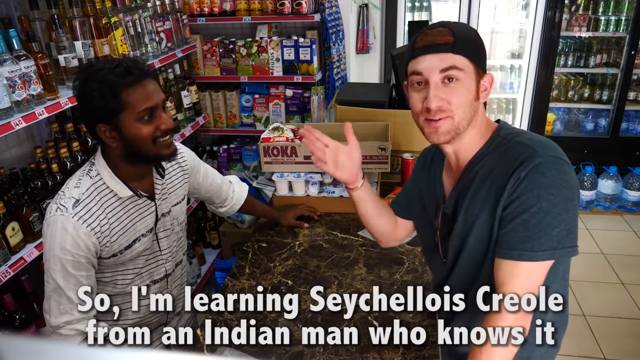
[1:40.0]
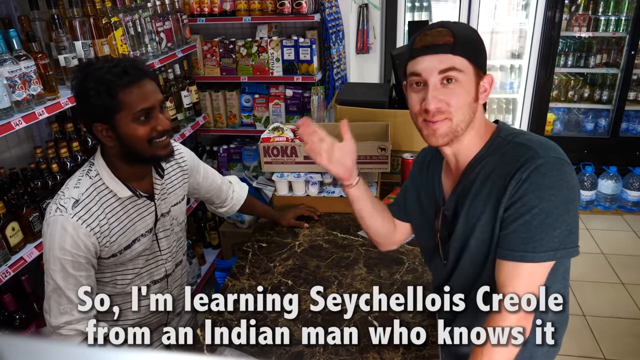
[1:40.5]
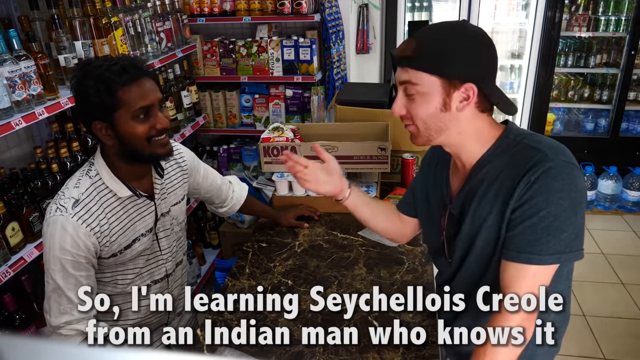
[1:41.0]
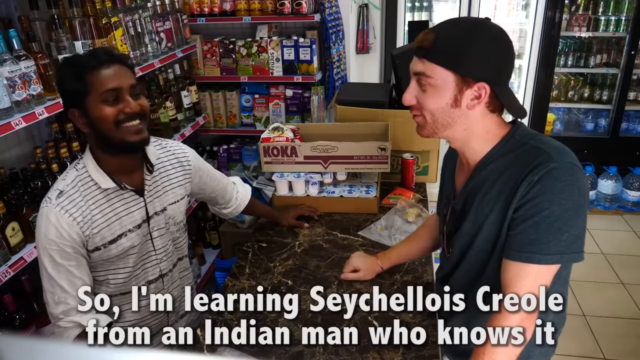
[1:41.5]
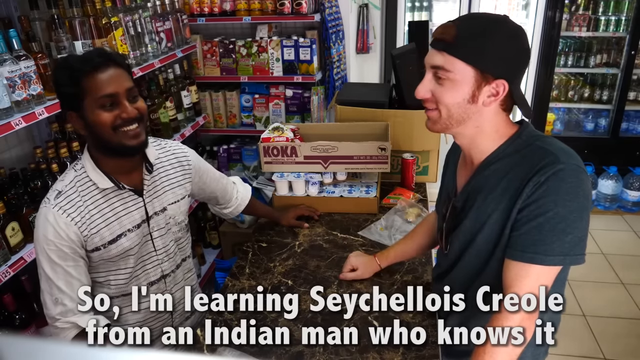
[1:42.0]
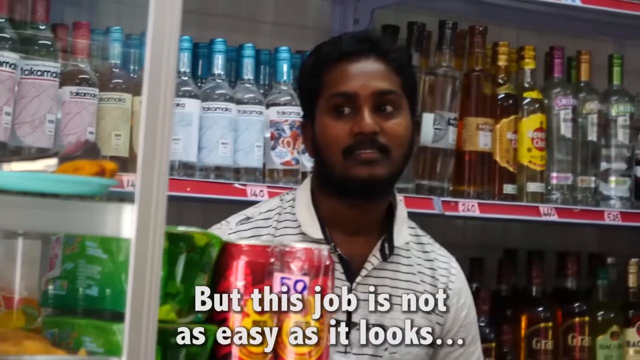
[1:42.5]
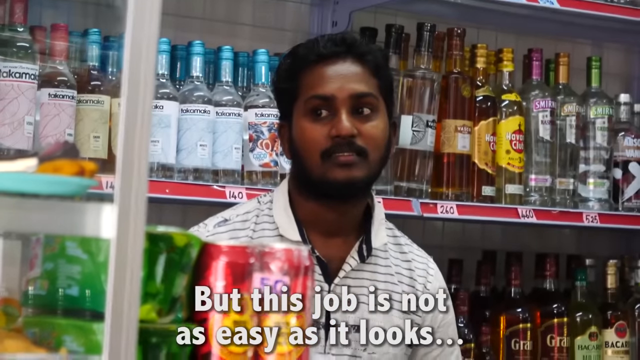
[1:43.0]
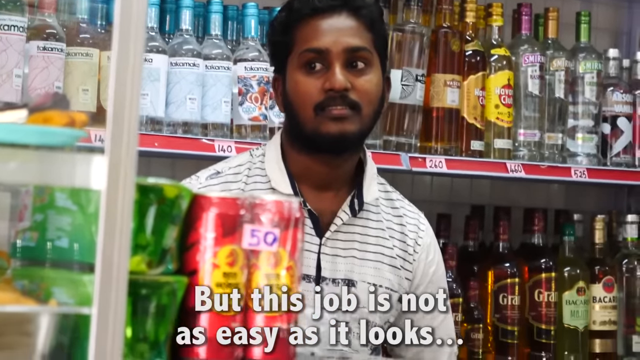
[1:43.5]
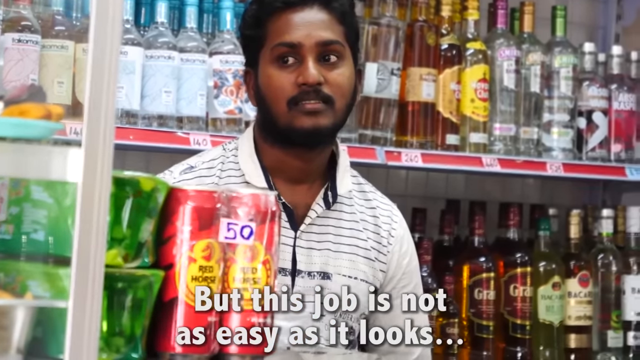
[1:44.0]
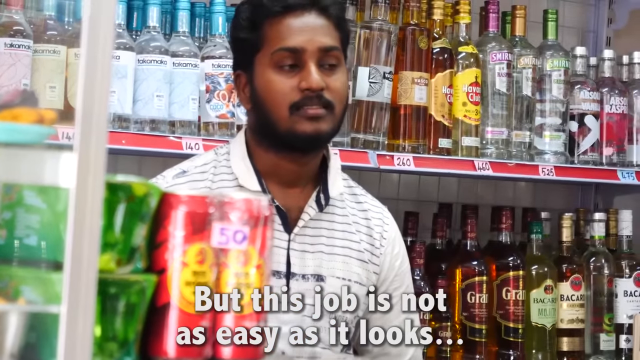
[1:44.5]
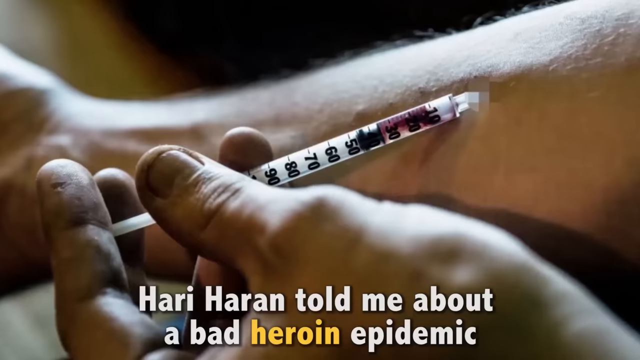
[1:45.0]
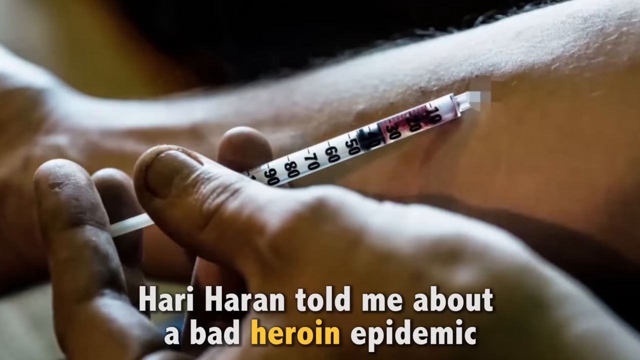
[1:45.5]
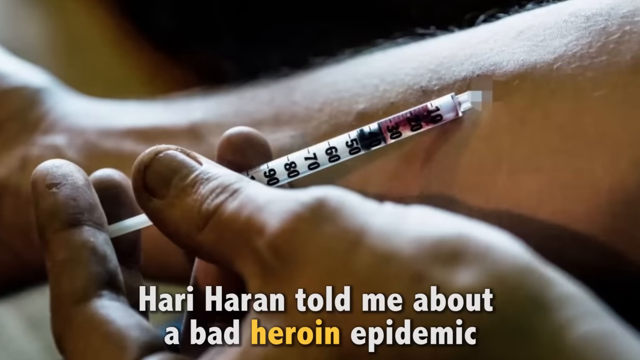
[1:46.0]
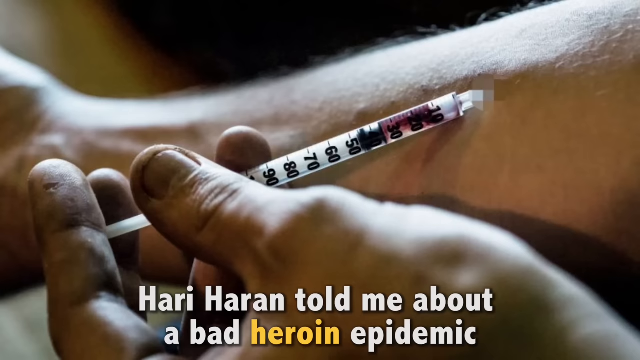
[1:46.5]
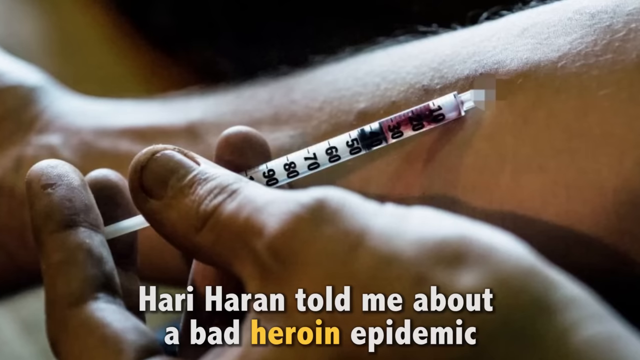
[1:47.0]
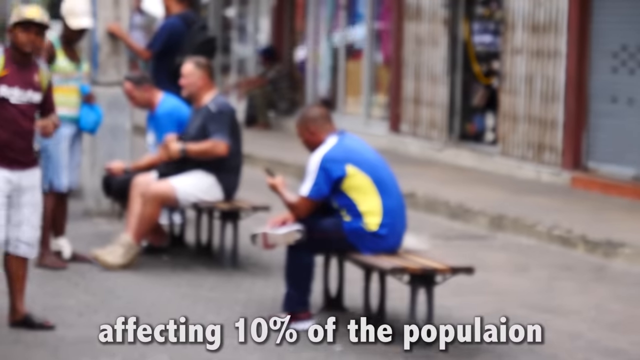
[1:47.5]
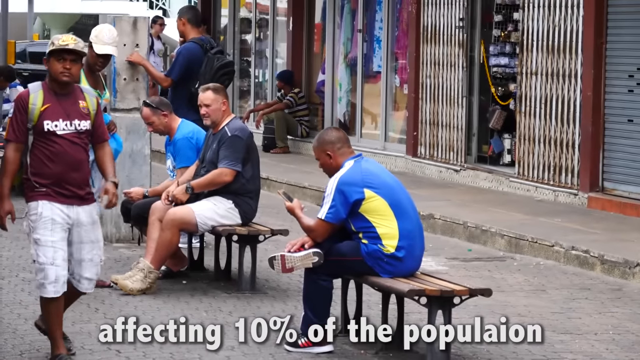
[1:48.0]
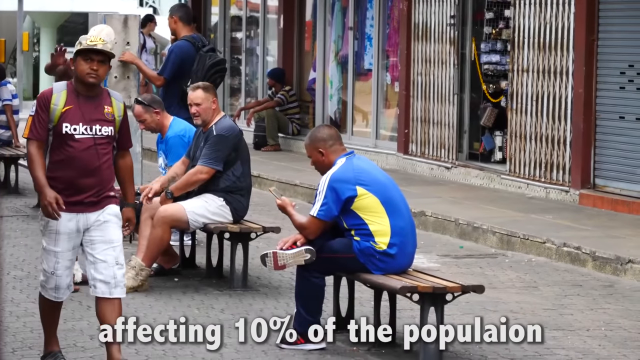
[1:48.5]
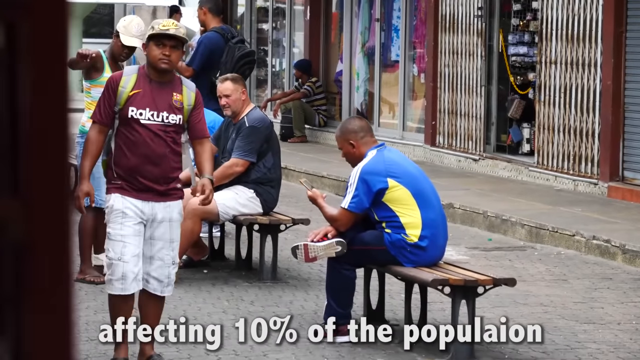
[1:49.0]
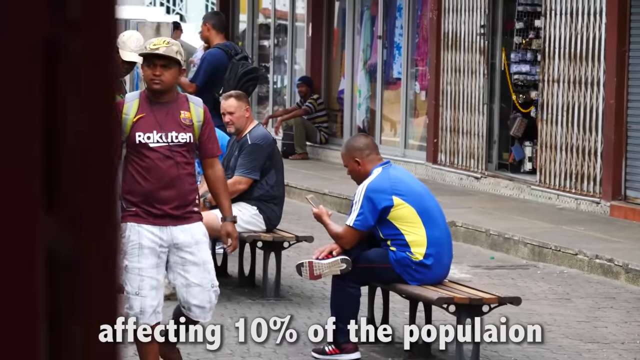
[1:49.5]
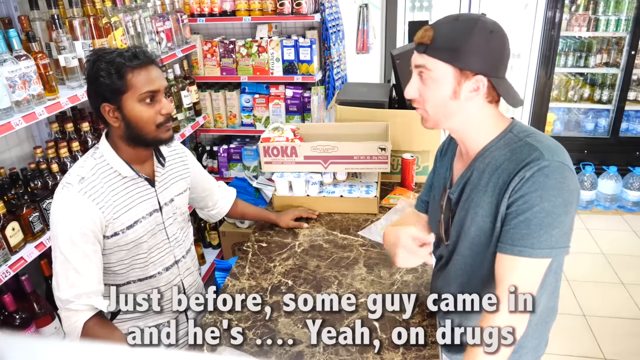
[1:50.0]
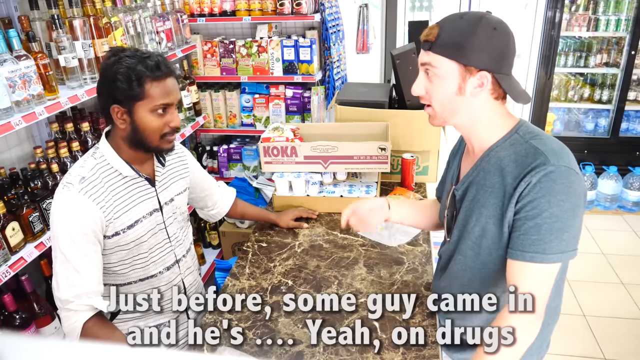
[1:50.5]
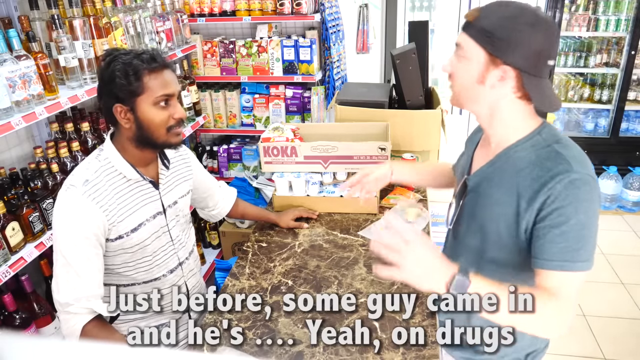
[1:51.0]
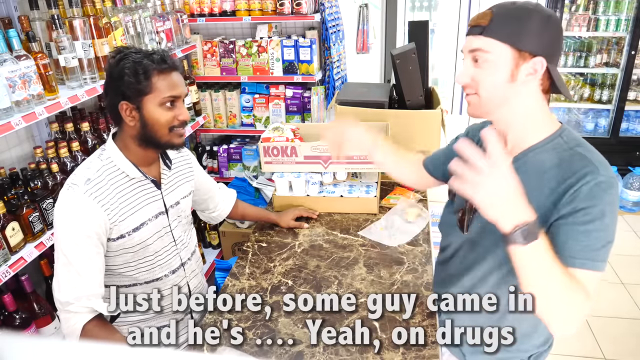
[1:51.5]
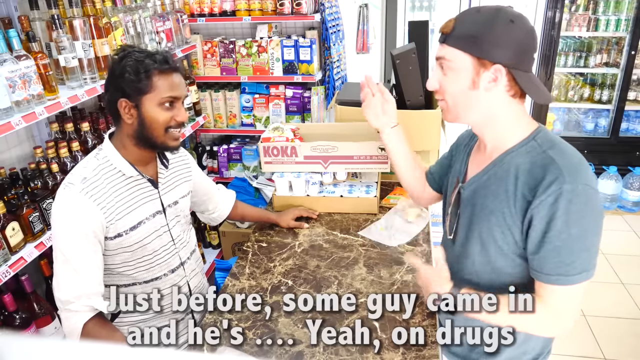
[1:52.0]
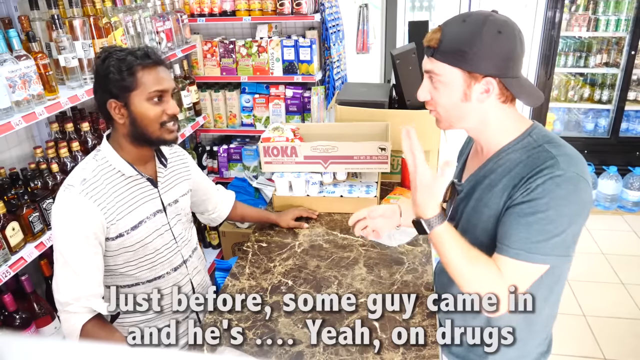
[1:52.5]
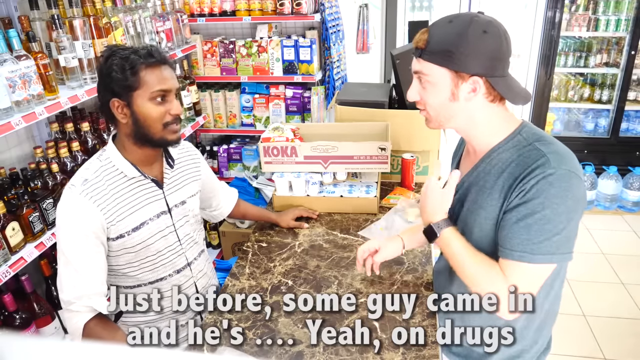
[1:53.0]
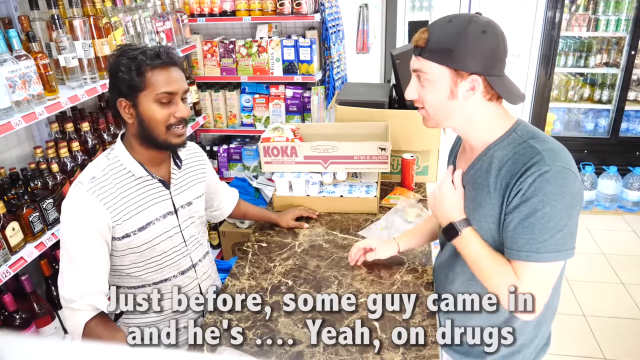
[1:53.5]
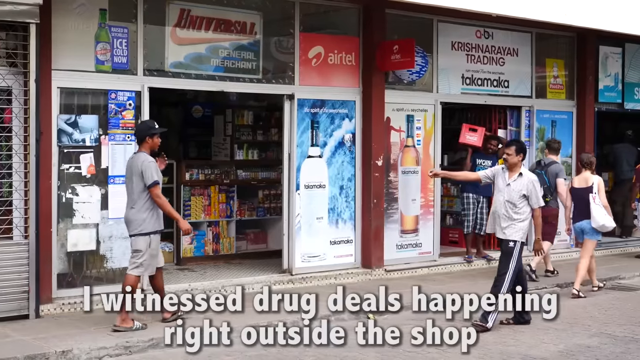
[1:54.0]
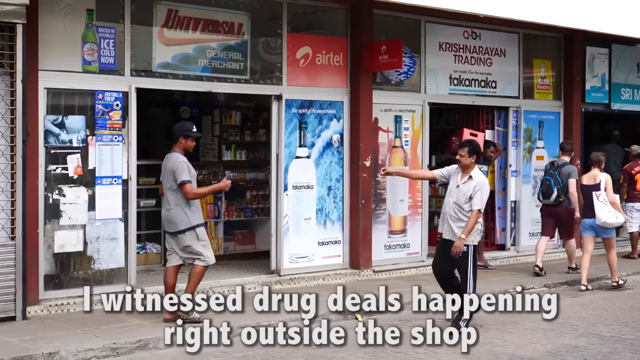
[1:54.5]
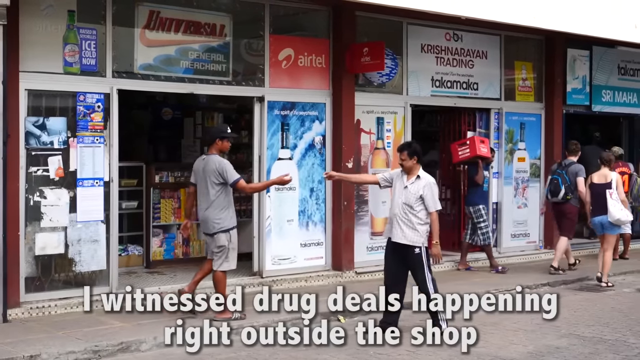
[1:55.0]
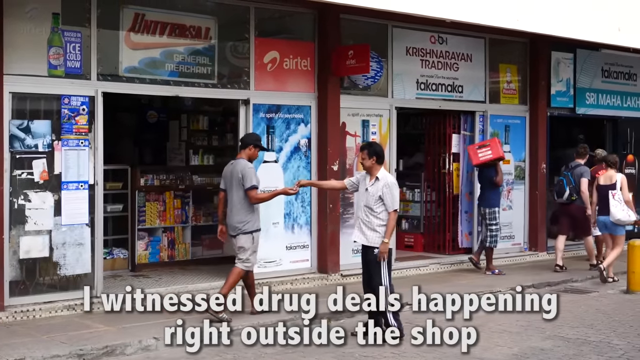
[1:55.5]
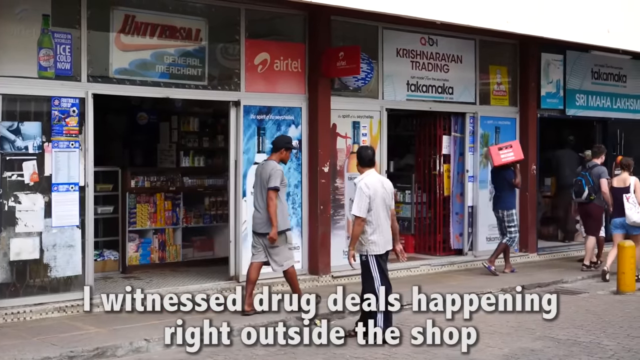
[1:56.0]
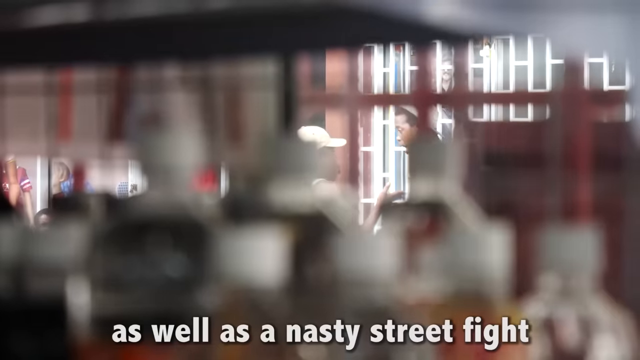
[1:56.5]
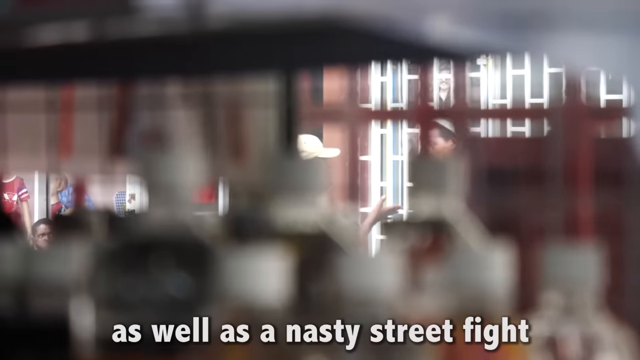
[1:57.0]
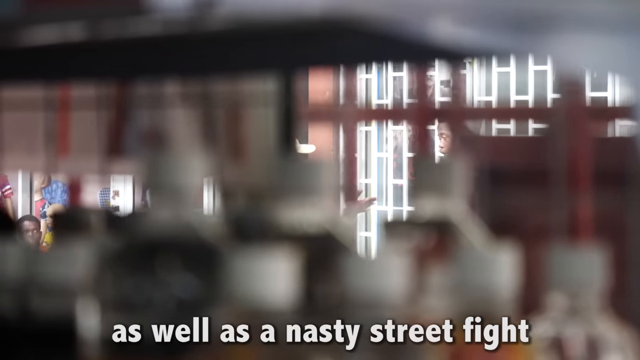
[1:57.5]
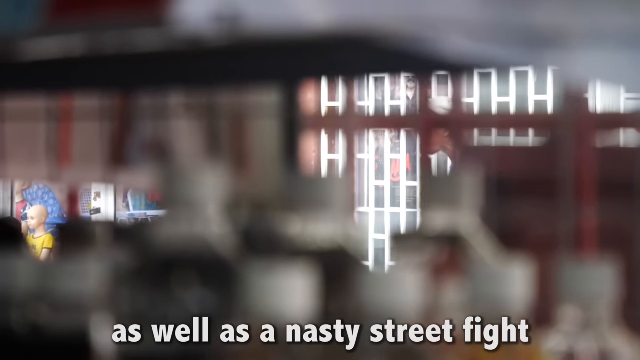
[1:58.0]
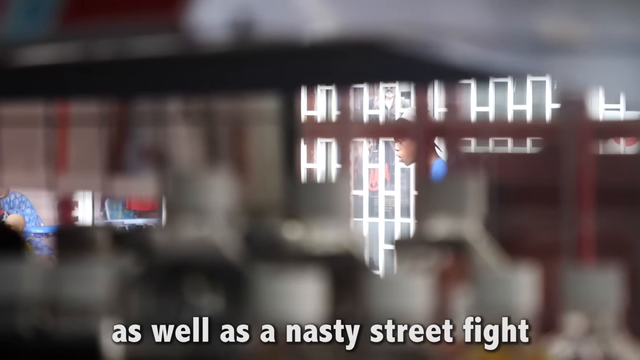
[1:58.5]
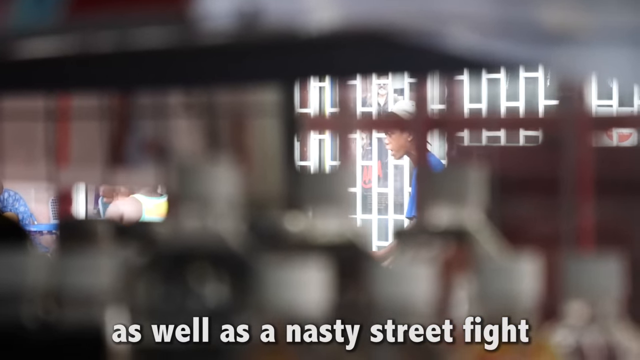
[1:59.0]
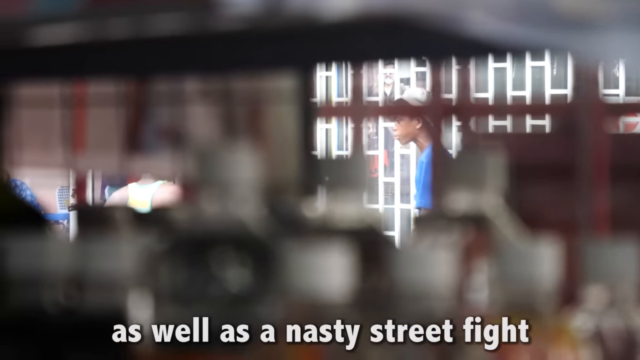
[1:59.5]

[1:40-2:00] The Indian man confirms that he is learning Seychelles Creole. Other products in the shop are shown, one of which seems to be a thermometer. The view then shows the outside, apparently a street, where men are seated on benches while other men pass by. The view returns inside the shop and shortly afterwards goes outside again, where people pass by, some carrying crates. The interview between the Indian man with black hair and the white man in the cap continues inside the shop, and both seem to enjoy talking about the shop.